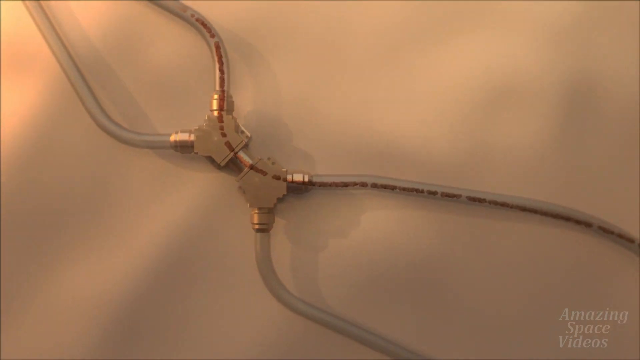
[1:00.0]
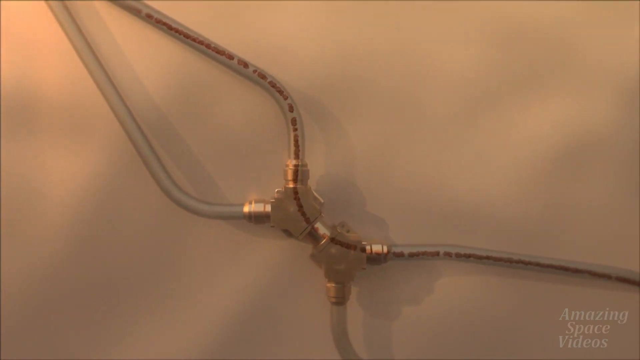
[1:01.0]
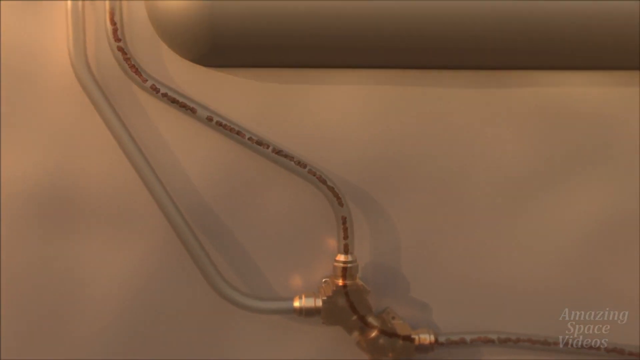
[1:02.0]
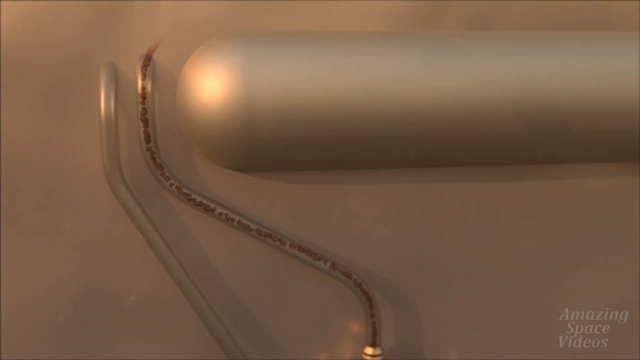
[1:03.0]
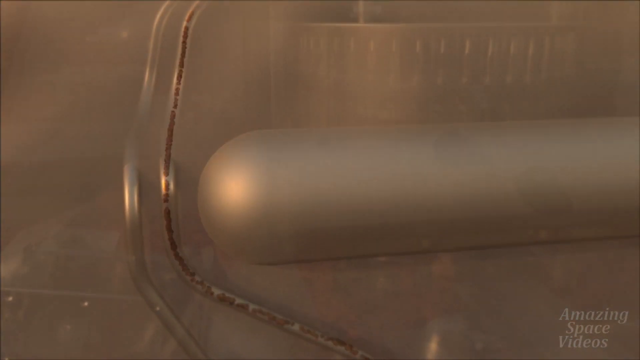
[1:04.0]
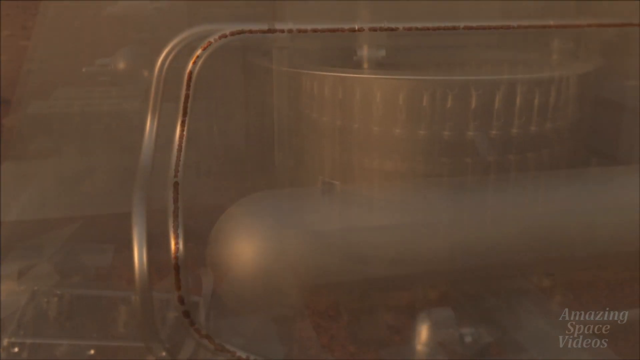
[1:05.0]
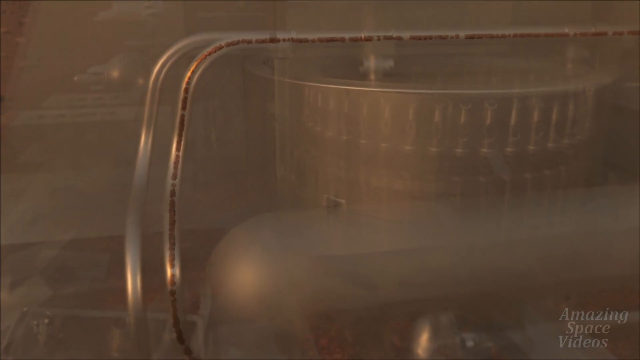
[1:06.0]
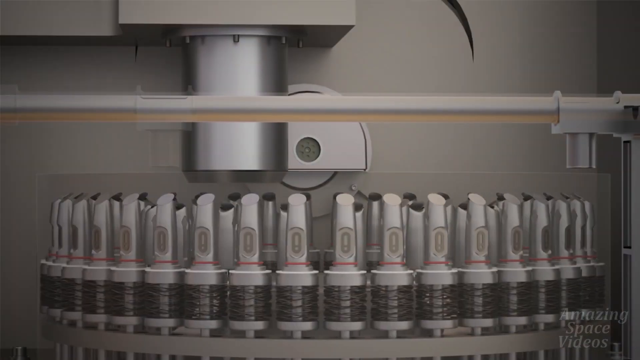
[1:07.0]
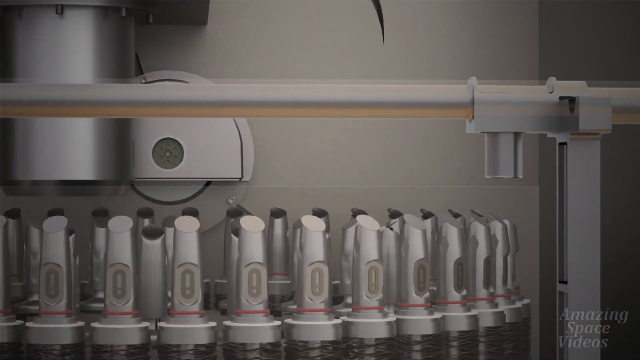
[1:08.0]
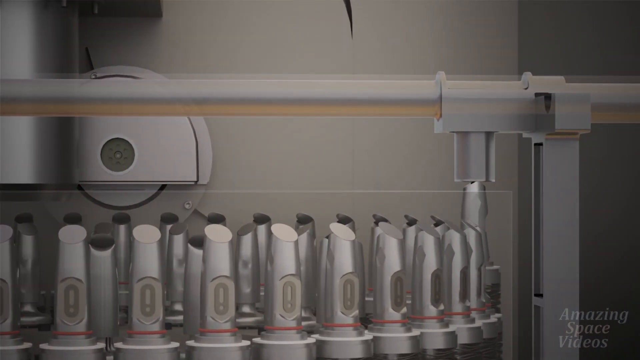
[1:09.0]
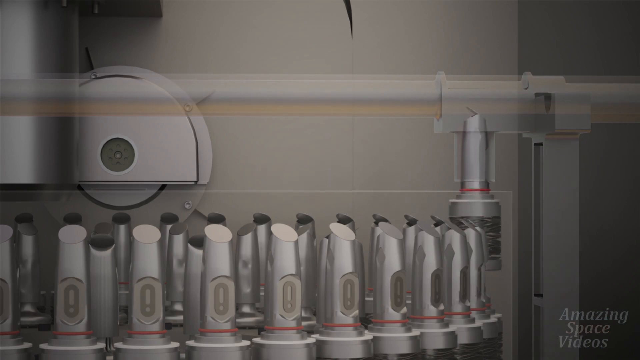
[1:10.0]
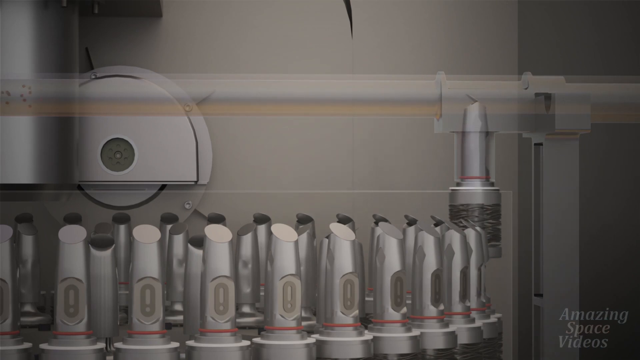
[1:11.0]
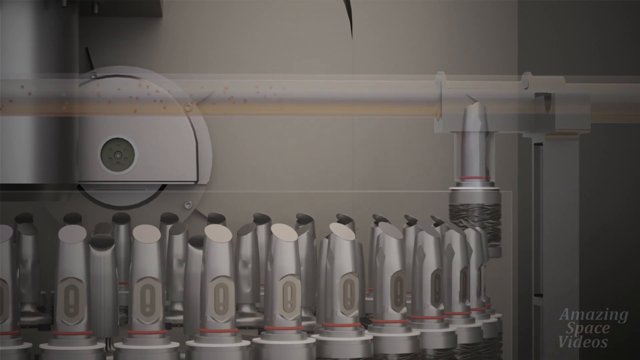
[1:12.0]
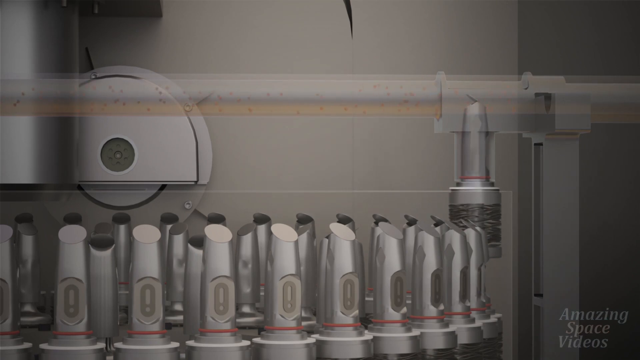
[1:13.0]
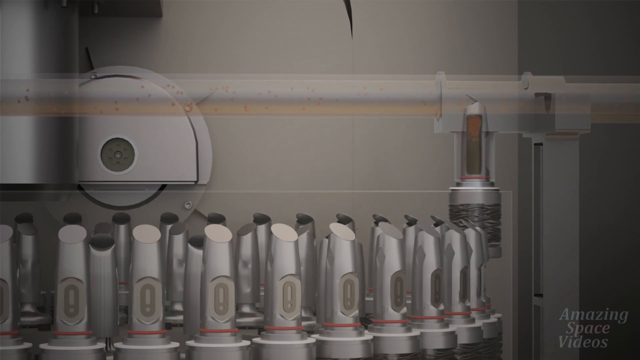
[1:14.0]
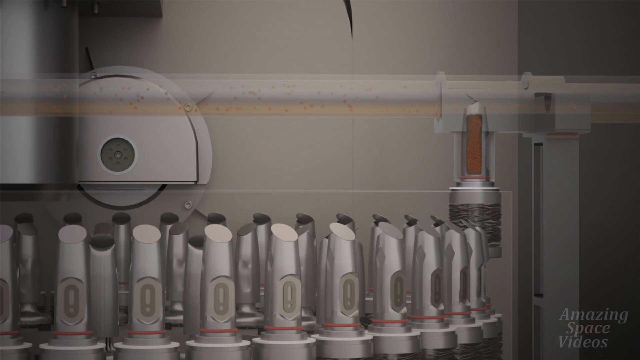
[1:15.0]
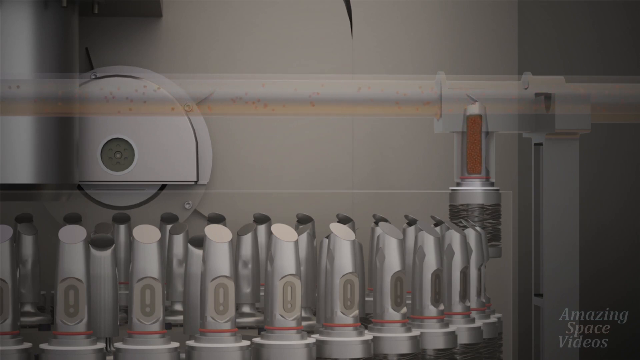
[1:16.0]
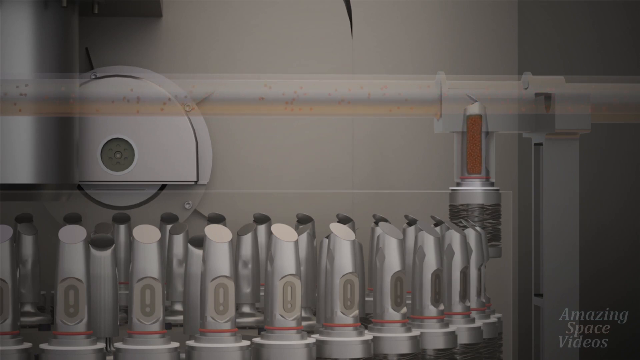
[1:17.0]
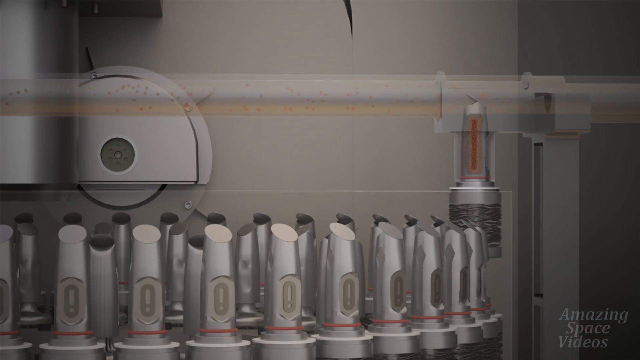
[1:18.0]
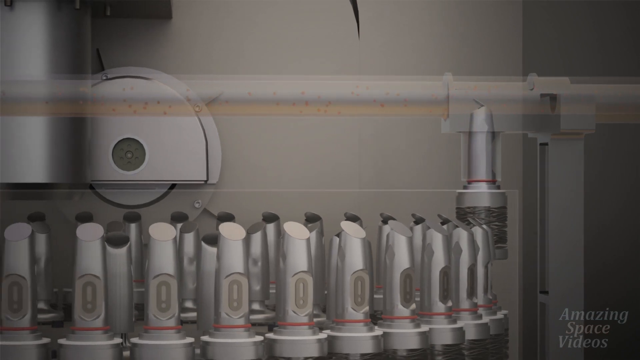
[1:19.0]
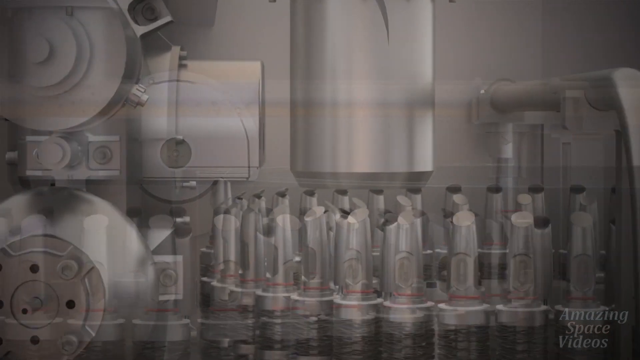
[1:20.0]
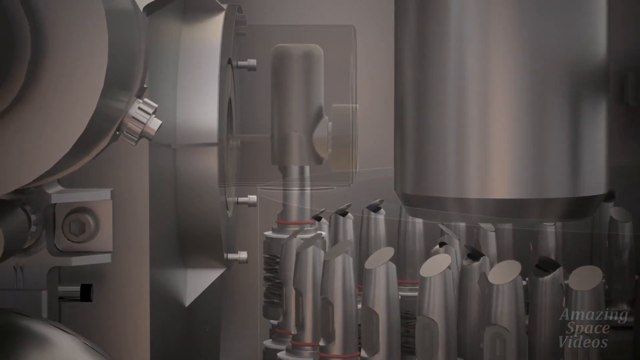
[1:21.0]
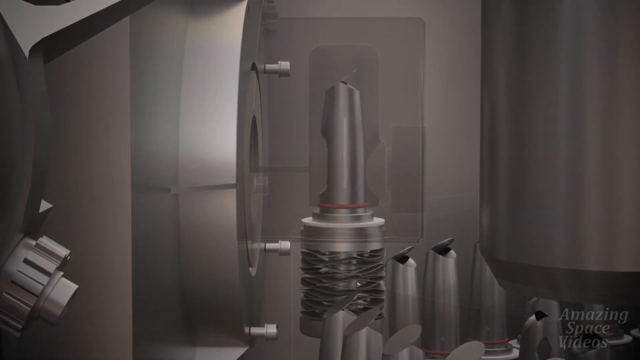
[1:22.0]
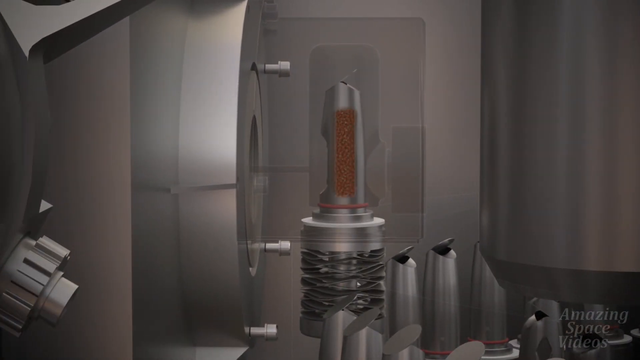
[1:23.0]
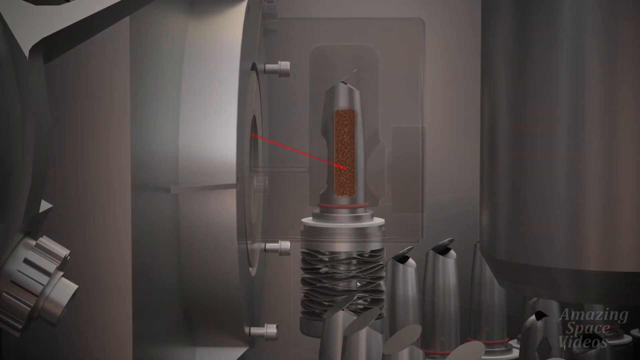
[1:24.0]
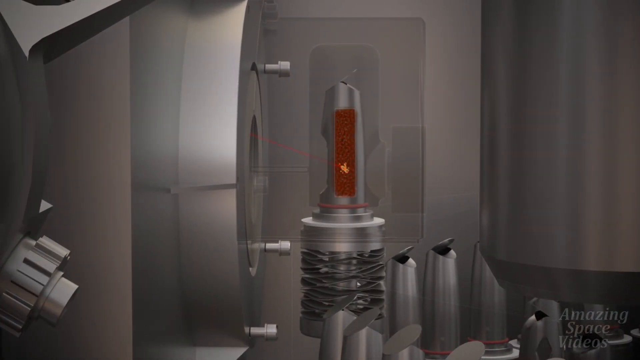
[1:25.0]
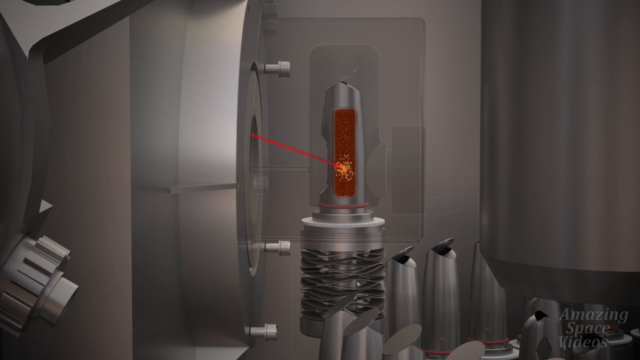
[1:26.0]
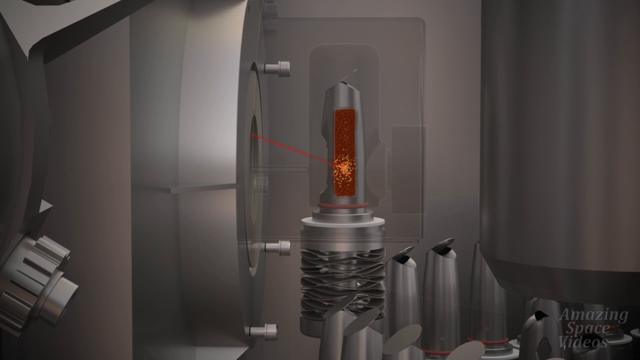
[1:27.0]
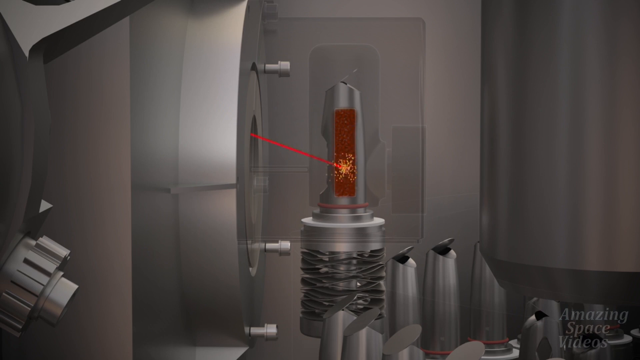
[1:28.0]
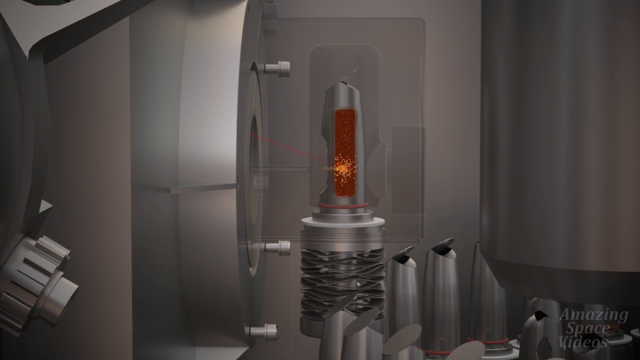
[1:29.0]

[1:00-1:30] A 3D rendering shows some kind of tube assembly: four see-through plastic tubes form a sort of X, and at the center are two Y-shaped brass fittings put together. Each Y is connected to a tube, and the bottoms of the Ys are connected to each other. A line of brown dots quickly moves through the uppermost two tubes toward the top left corner. They eventually circle around, the dirt continues circling upward, and then goes toward the right into a machine assembly. The view quickly fades into a new 3D rendering of multiple tubes in a spinning assembly, which spins counterclockwise. One of the tubes is raised to a metal pipe, where the brown specks seen earlier are inserted into the pipe and tube. Once the tube is filled, it is lowered back into the rotating assembly.